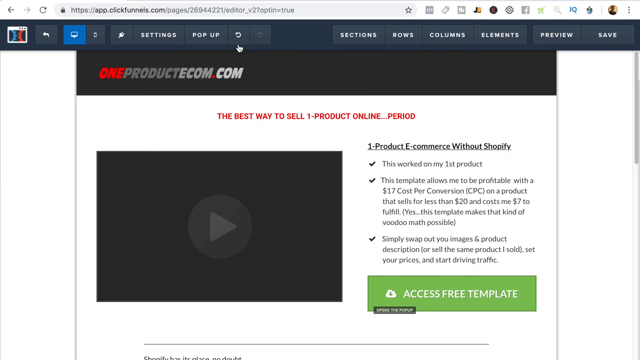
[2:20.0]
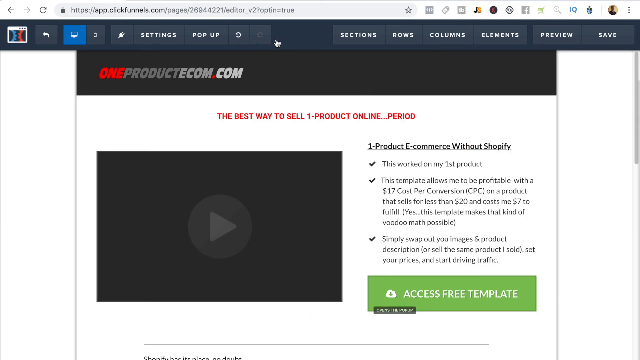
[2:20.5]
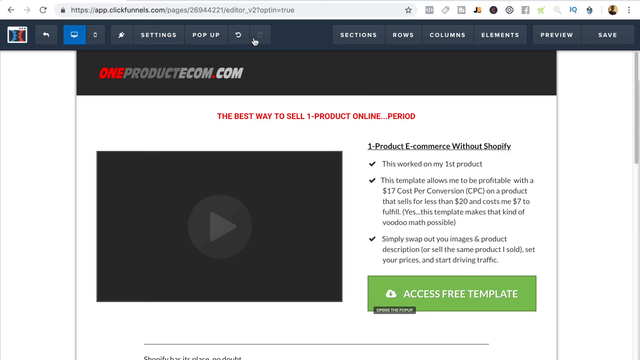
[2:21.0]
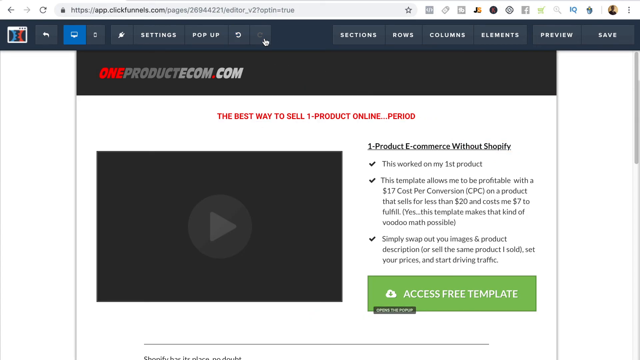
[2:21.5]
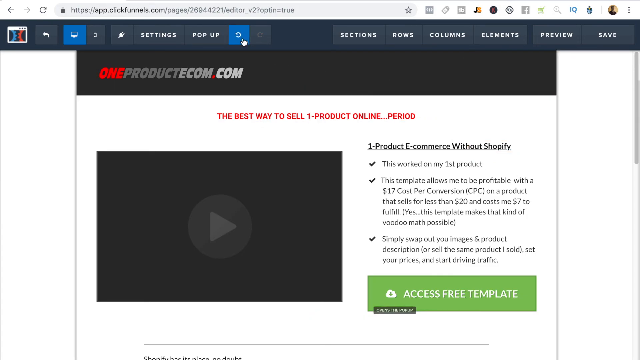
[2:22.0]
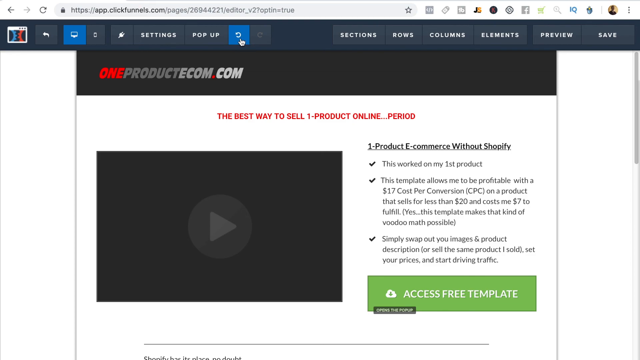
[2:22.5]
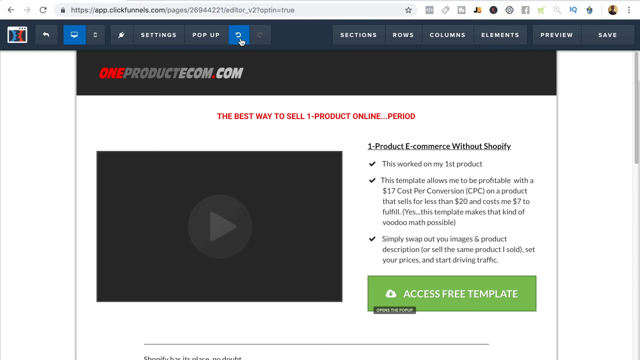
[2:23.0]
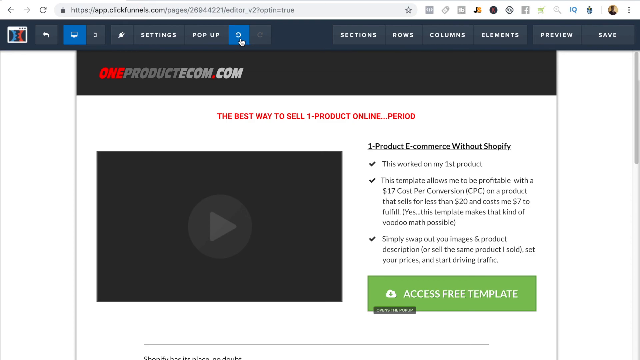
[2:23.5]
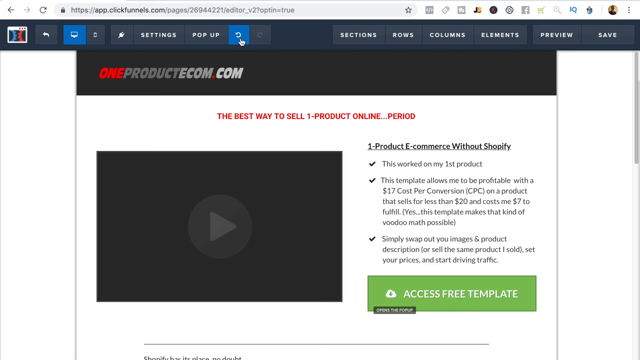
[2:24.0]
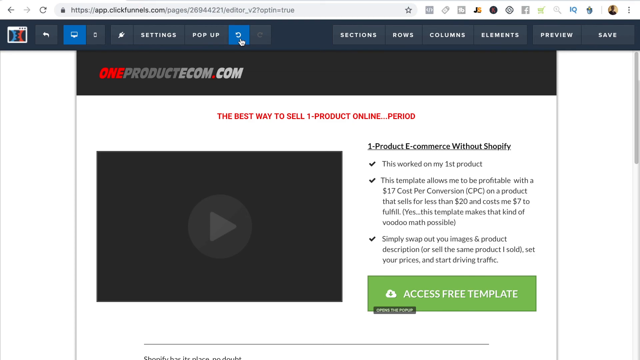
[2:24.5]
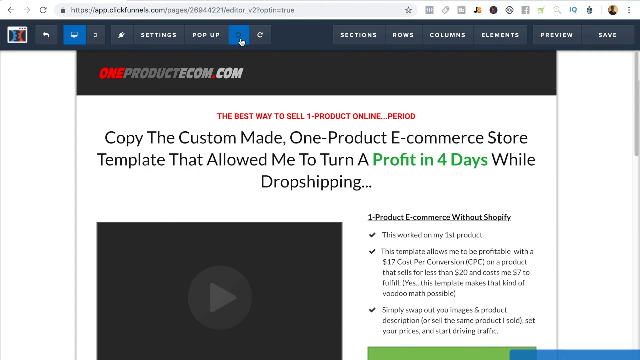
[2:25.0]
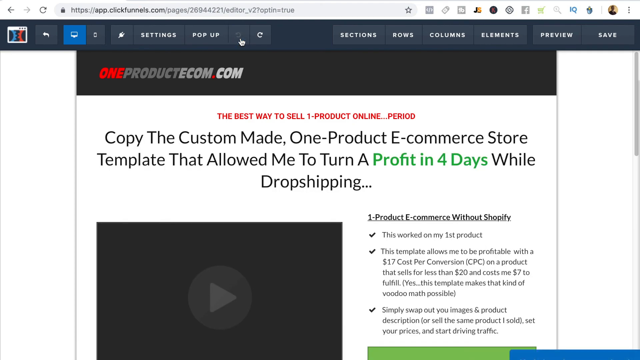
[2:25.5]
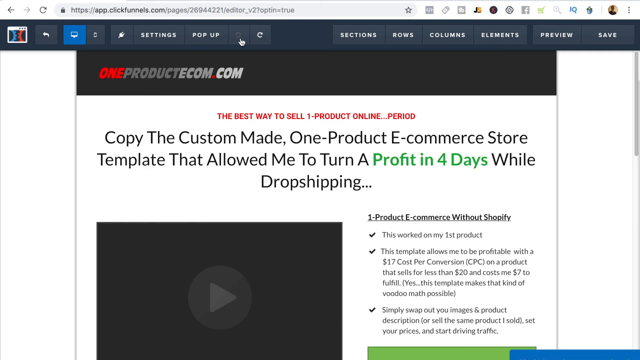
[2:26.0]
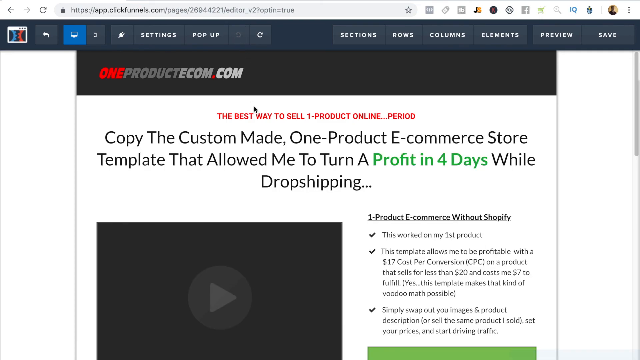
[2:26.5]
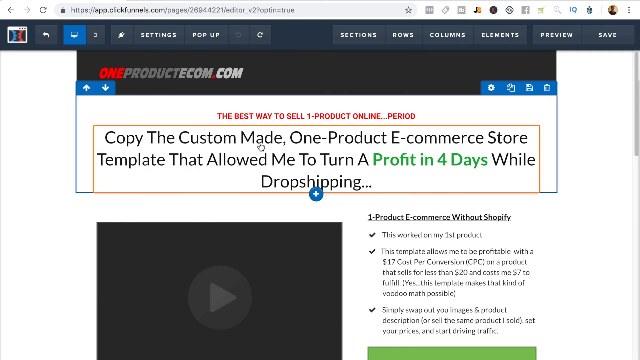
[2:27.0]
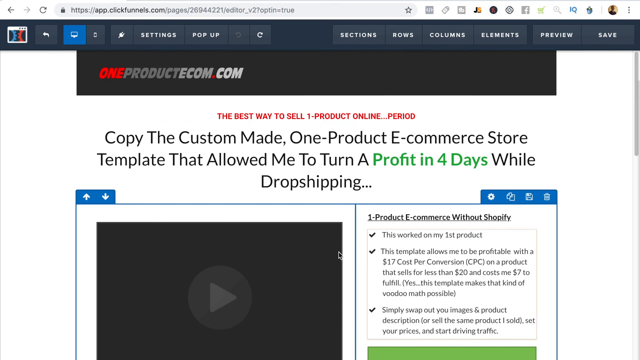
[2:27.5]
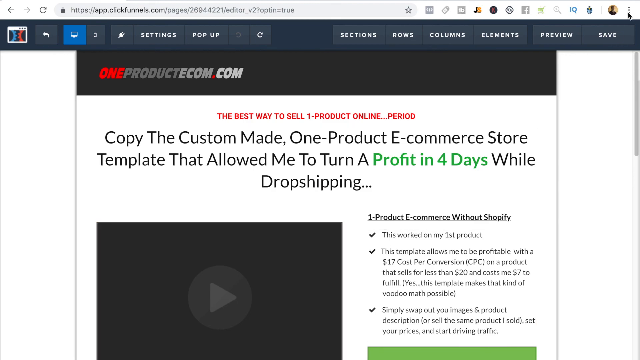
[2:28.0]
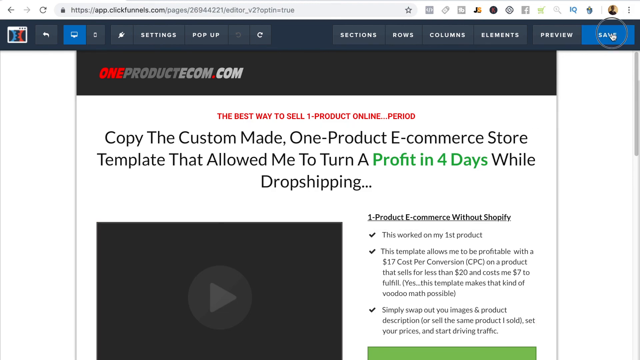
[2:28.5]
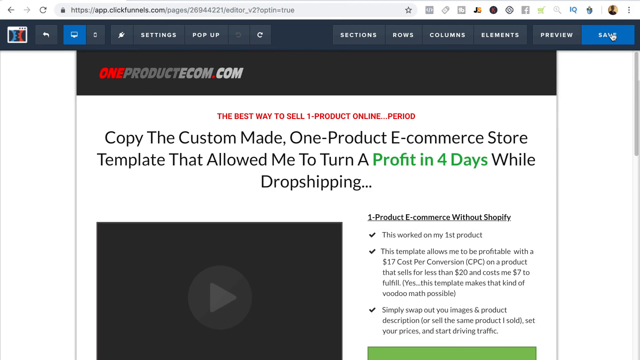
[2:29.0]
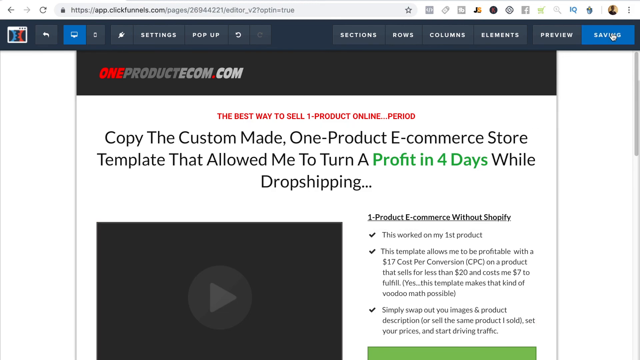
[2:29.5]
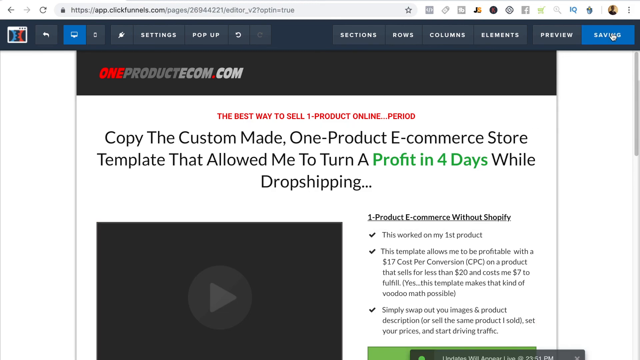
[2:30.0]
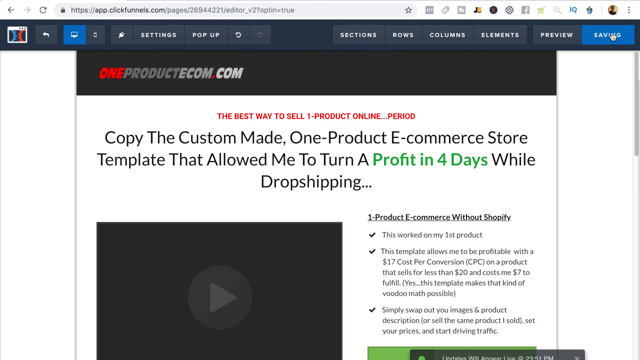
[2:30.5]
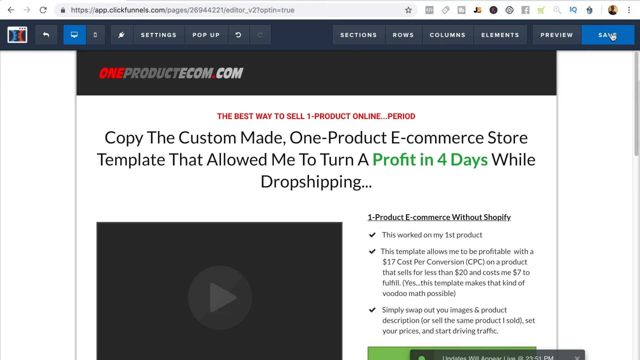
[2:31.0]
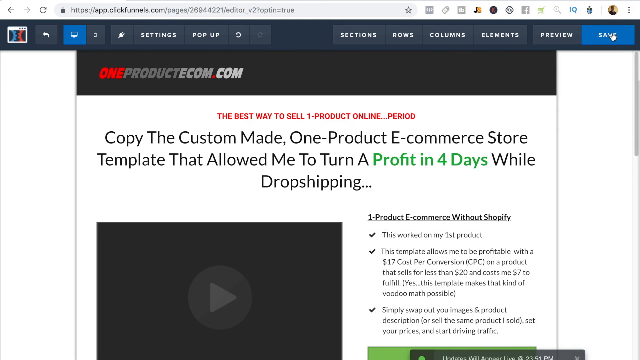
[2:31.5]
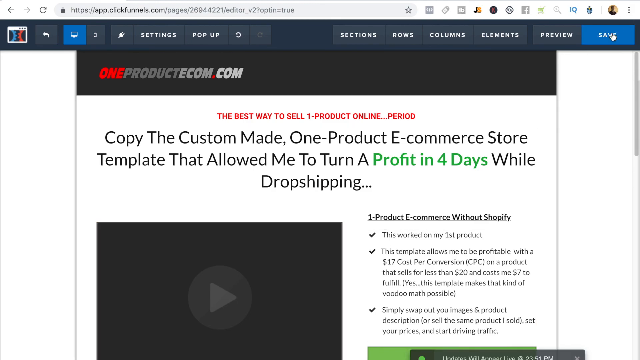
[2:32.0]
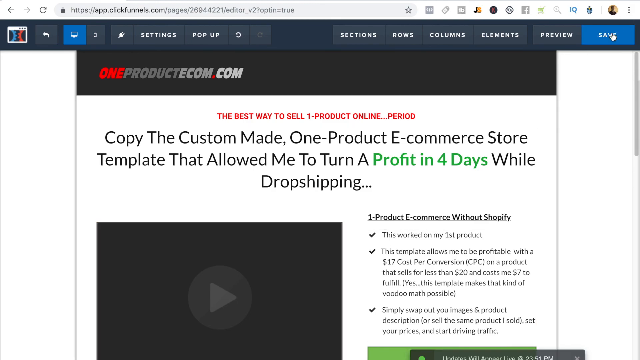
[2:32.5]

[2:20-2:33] On the edited page, the cursor hovers near the top of the screen, where a banner holds a back button, a full screen icon, a mobile icon, a plug icon, the word "settings," the word "pop-up," a reload icon, an undo icon, a redo icon, and "sections," "rows," "columns," "elements," "preview," and "save." The mouse hovers over the undo icon and clicks it, a small circle appearing around the cursor, and the title of the blog reappears exactly where it was. The mouse hovers over the elements of the page again, then moves to the save button and clicks it, and the word "save" turns into "saving."